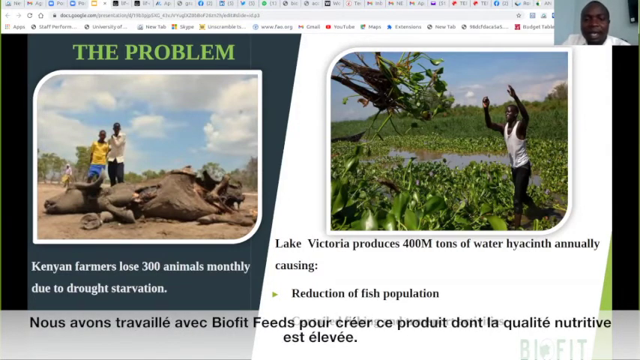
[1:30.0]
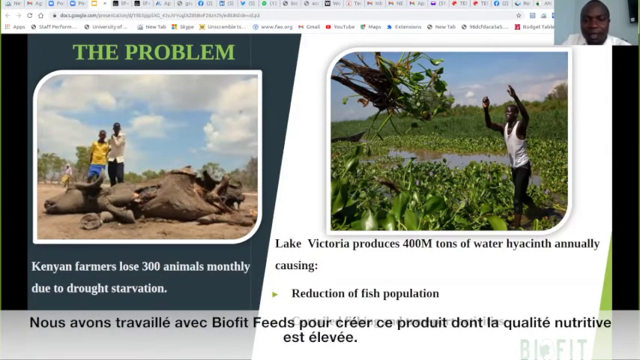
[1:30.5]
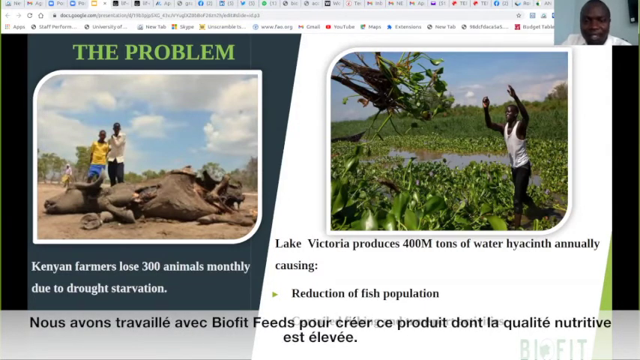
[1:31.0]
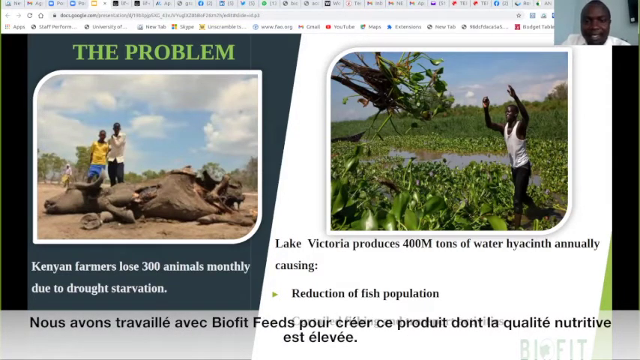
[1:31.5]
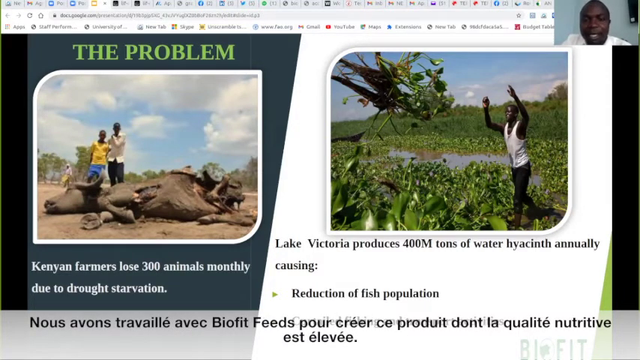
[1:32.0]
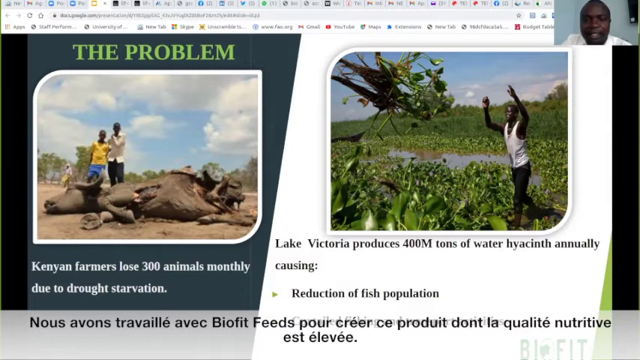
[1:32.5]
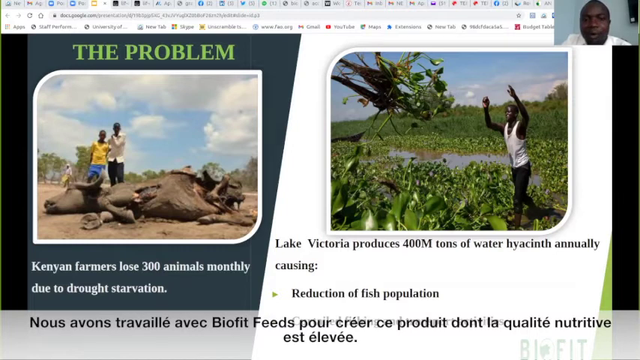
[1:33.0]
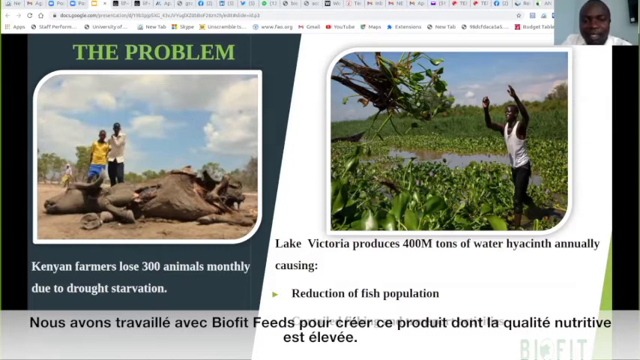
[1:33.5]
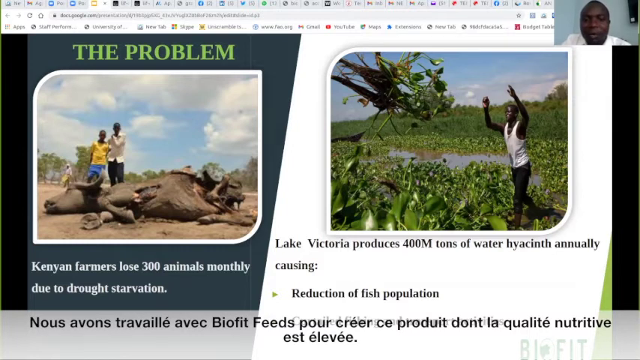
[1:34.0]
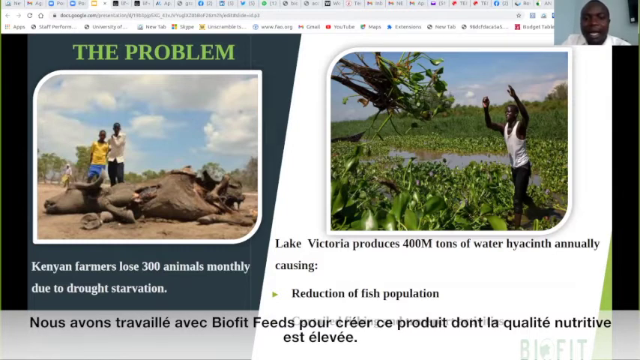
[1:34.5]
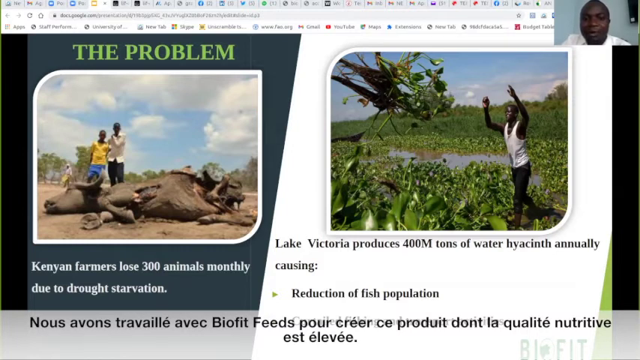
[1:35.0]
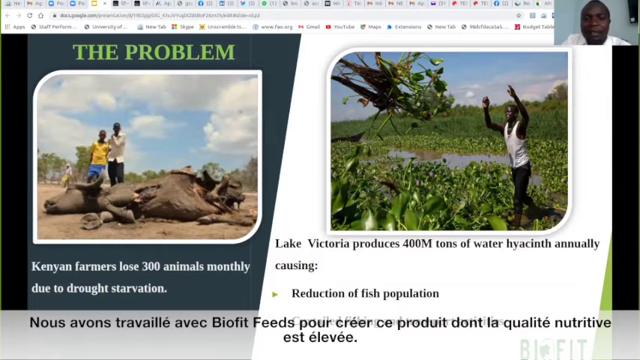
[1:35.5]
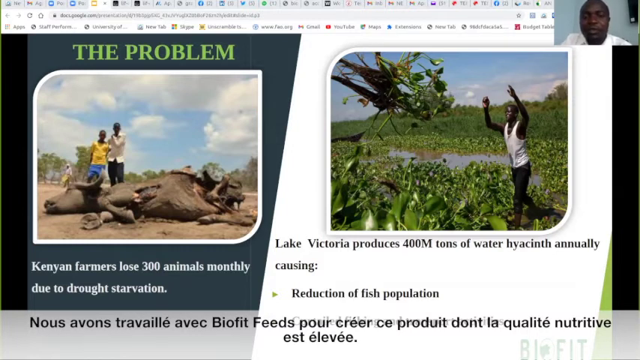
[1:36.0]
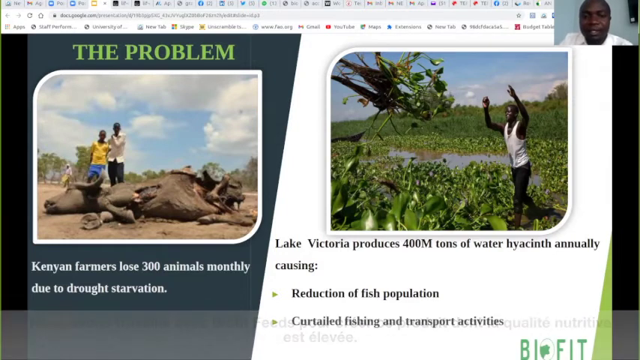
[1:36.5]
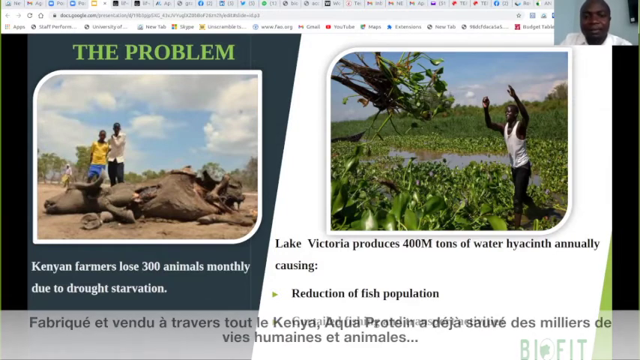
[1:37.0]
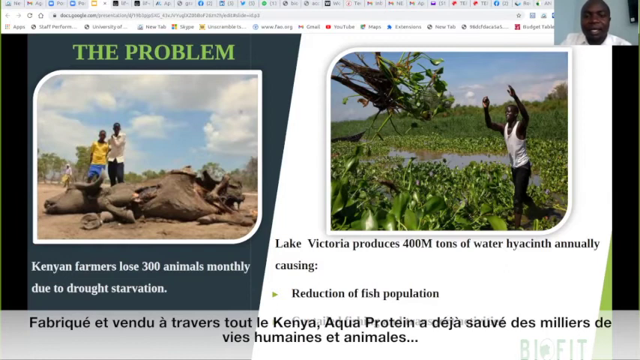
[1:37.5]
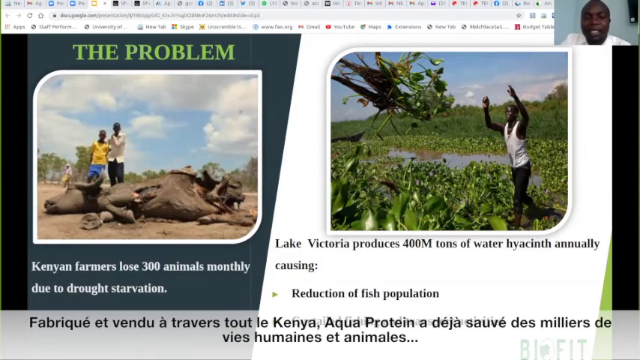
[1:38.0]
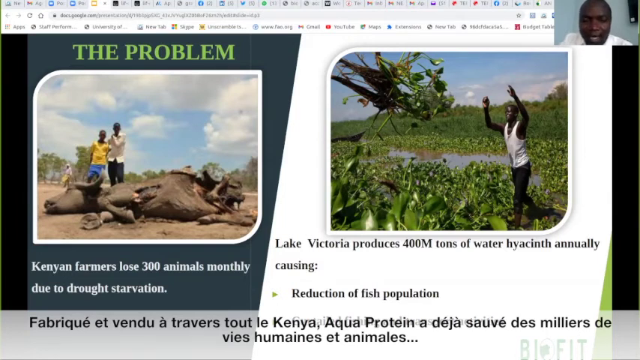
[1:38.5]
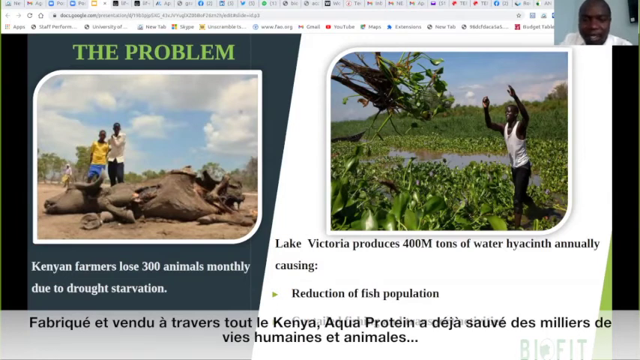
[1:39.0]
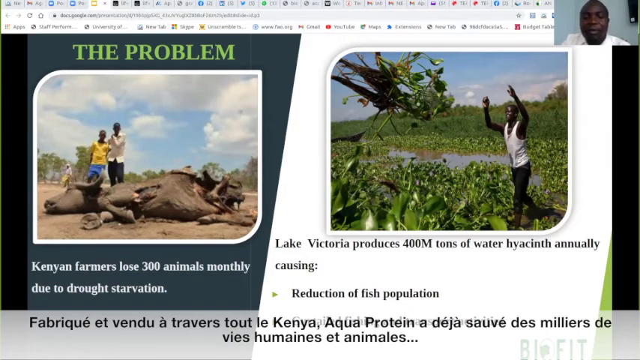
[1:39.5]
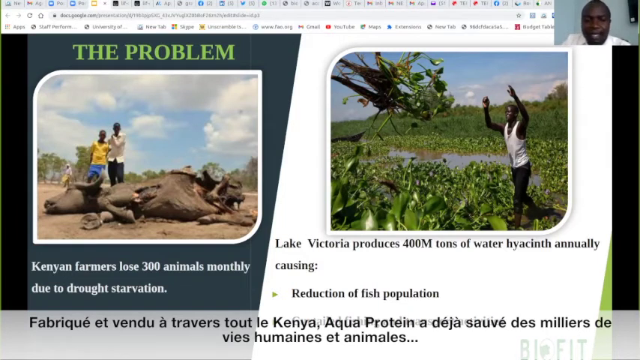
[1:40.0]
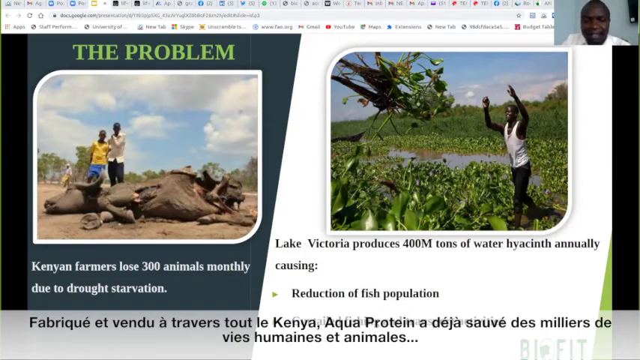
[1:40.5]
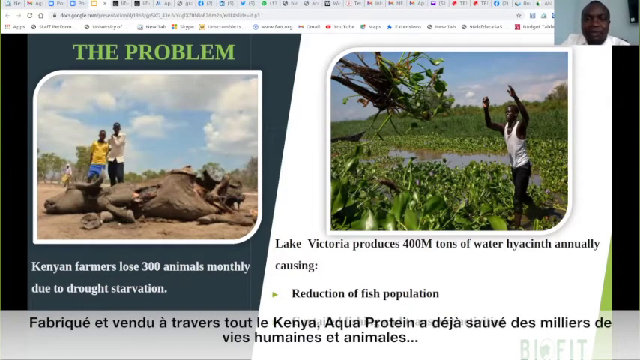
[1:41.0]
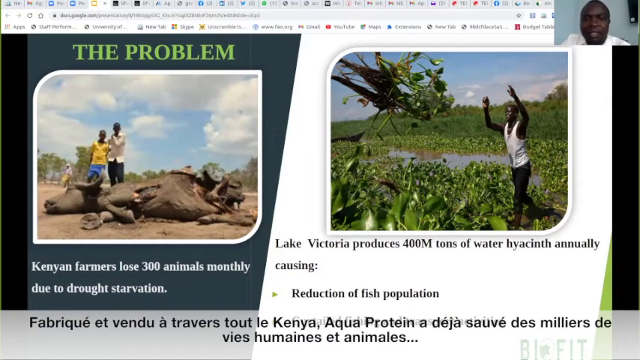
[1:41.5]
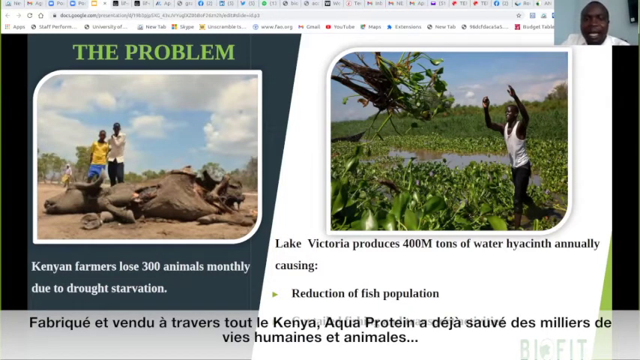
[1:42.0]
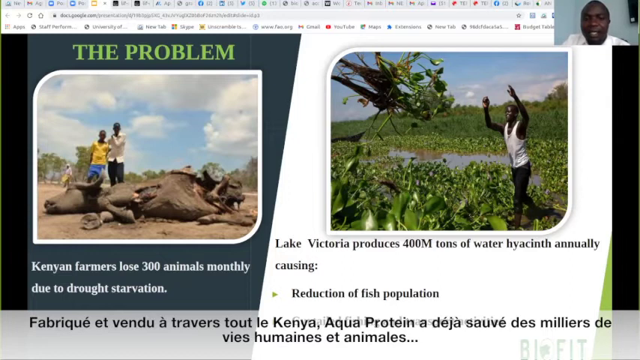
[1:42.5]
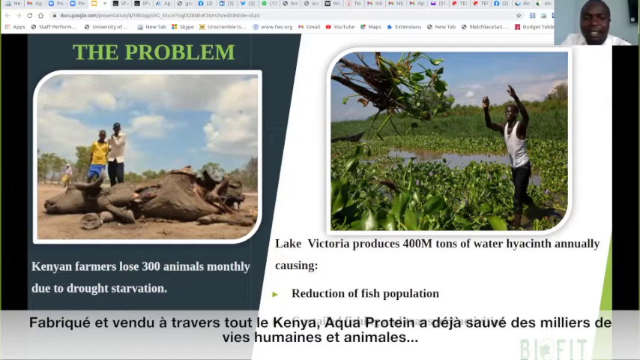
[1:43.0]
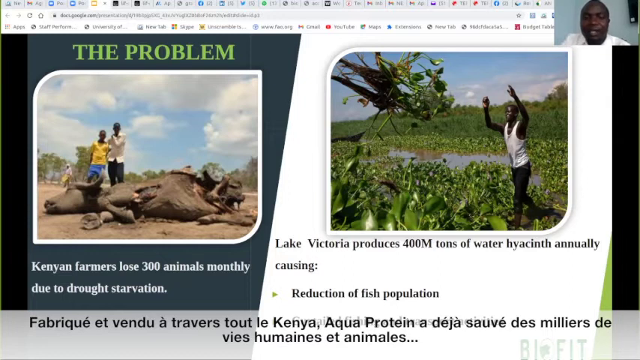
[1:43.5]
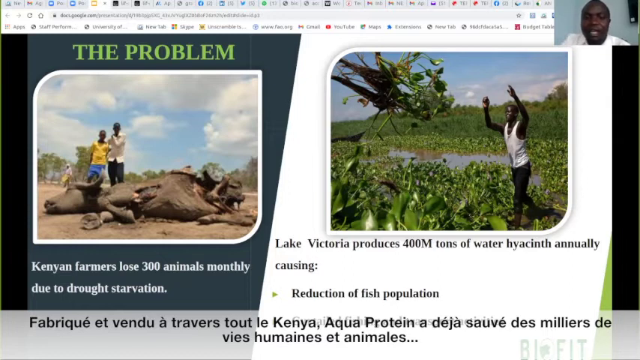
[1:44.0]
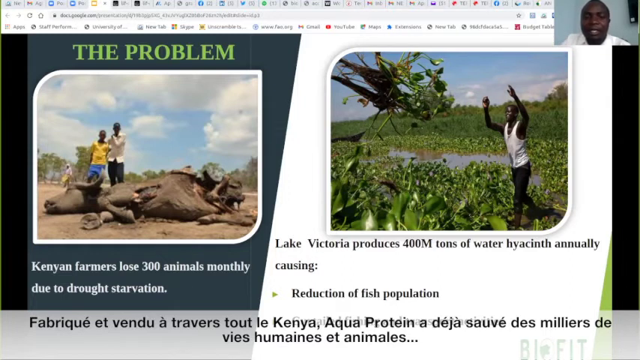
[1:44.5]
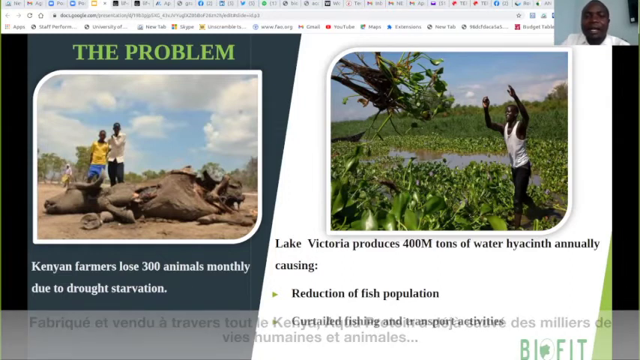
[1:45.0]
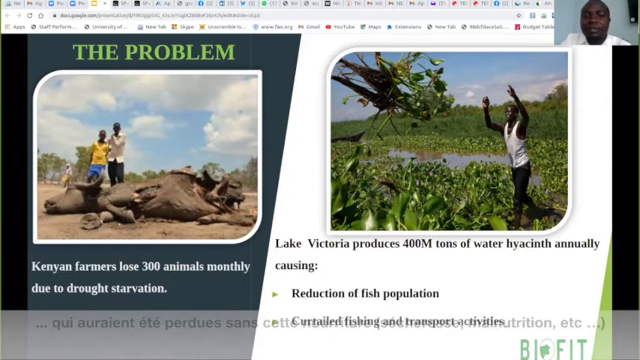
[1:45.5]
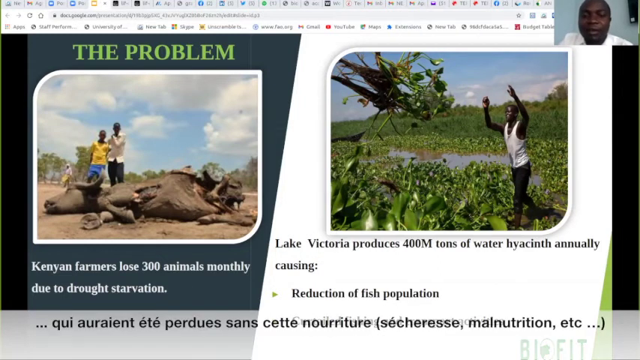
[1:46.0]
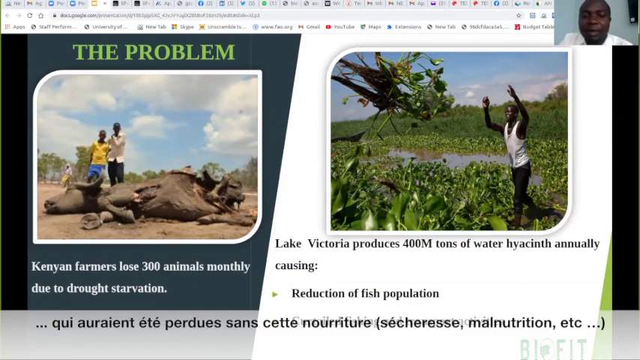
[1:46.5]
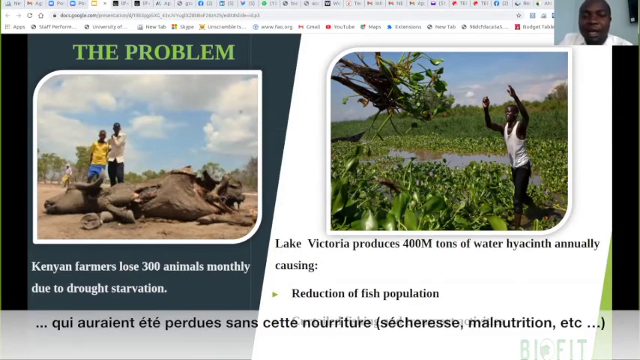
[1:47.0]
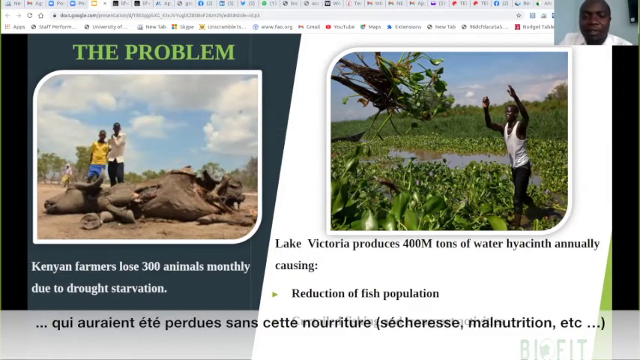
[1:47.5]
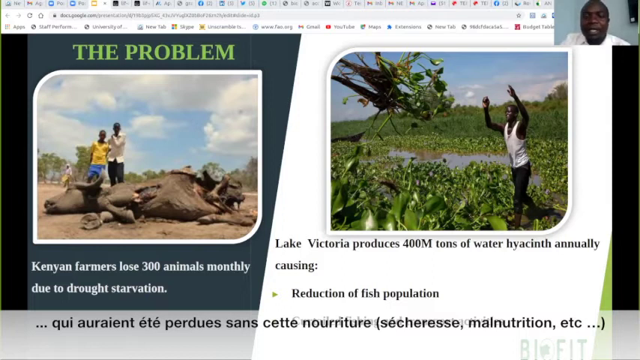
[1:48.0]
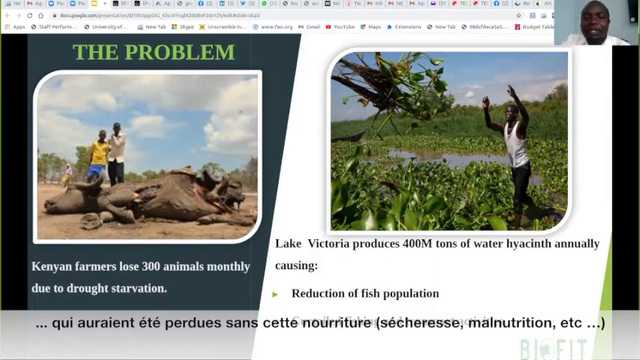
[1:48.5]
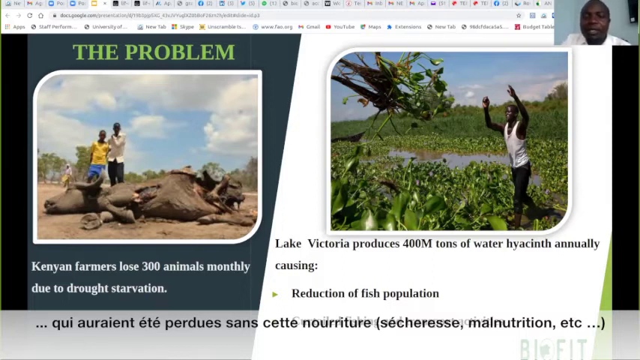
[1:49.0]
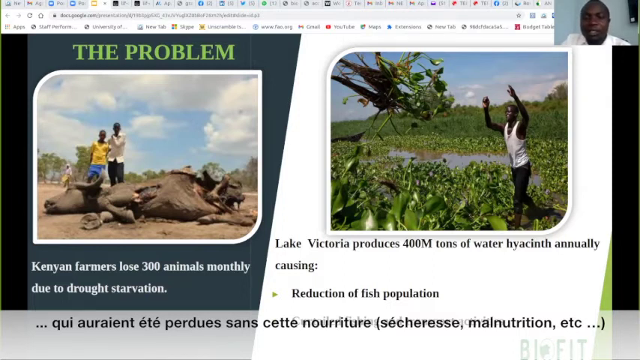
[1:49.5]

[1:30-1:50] The same slide remains on screen, with the man still talking in a small window. French text refers to problems with malnutrition. The picture of the water buffalo affected by drought starvation is visible.